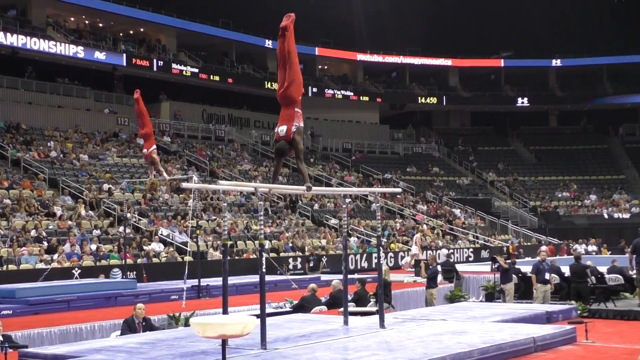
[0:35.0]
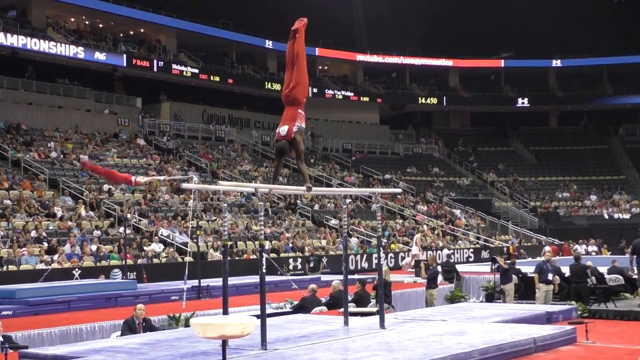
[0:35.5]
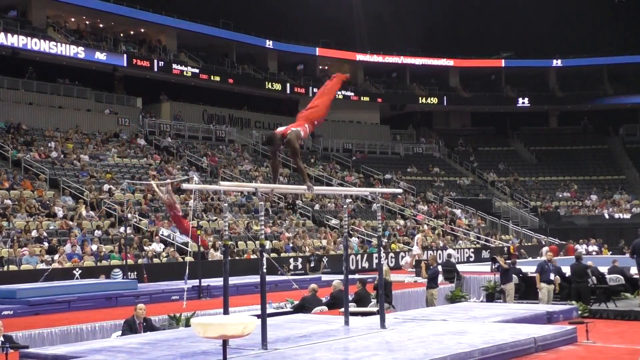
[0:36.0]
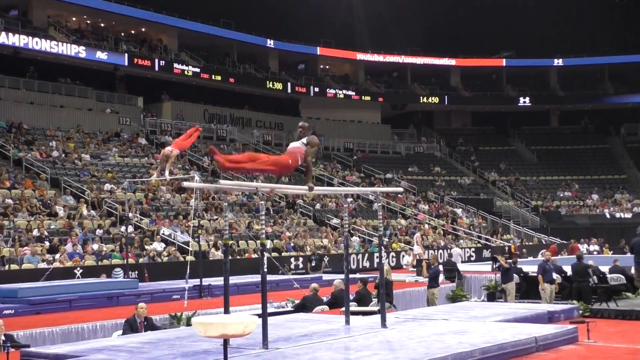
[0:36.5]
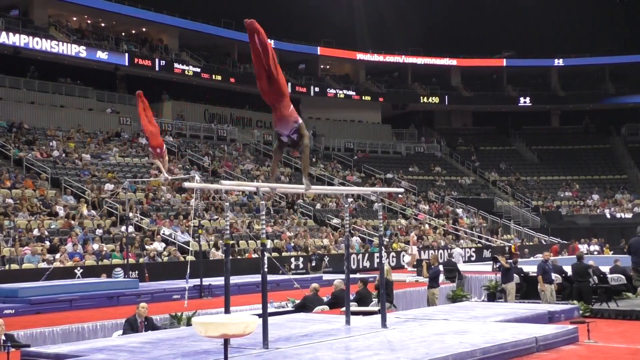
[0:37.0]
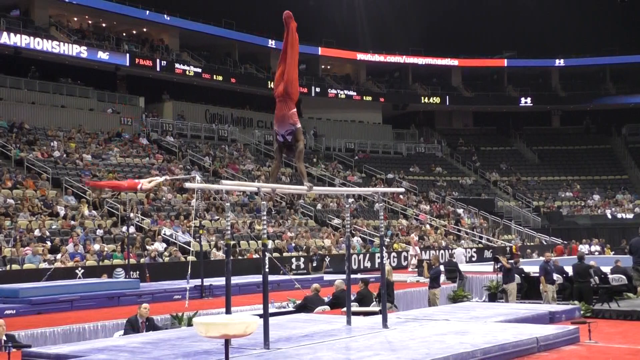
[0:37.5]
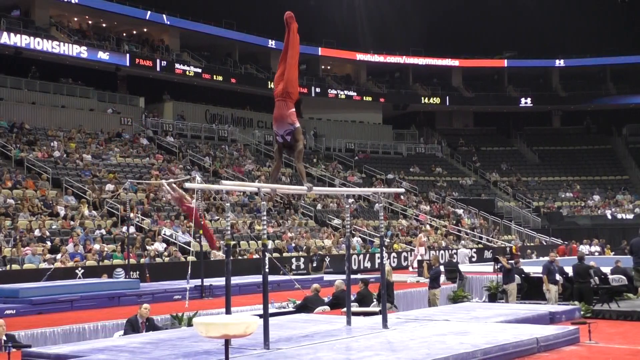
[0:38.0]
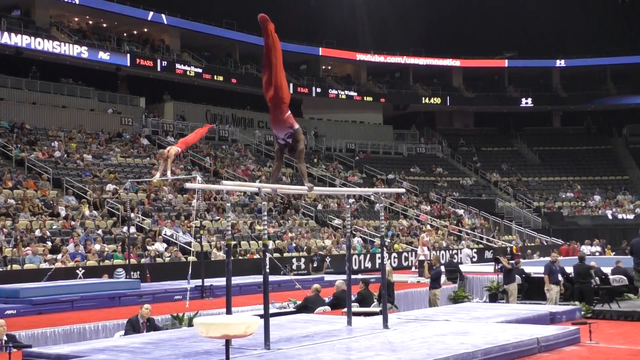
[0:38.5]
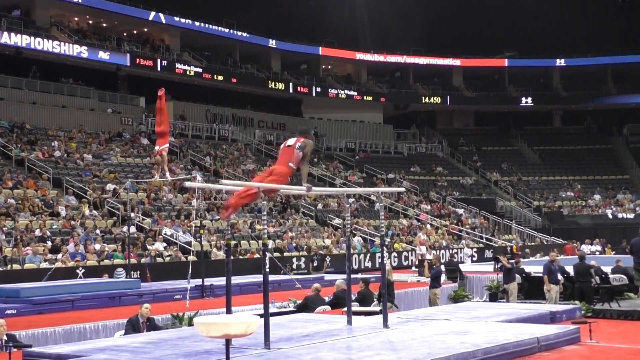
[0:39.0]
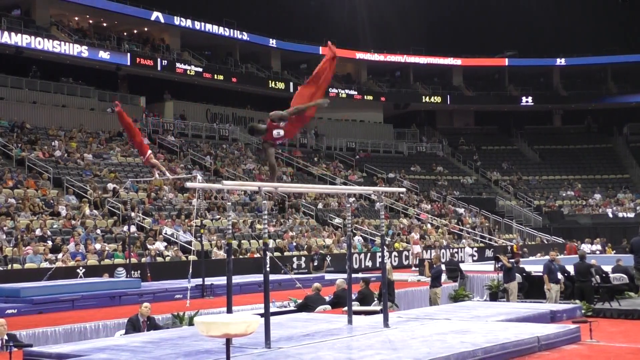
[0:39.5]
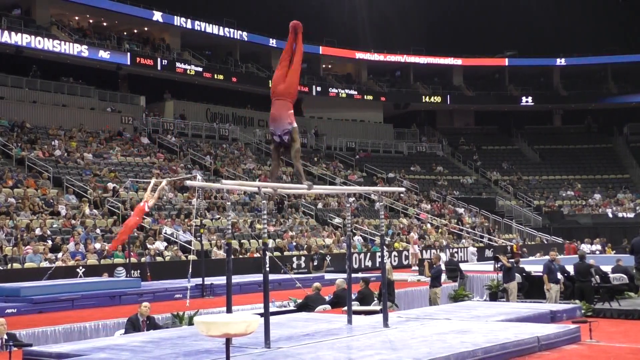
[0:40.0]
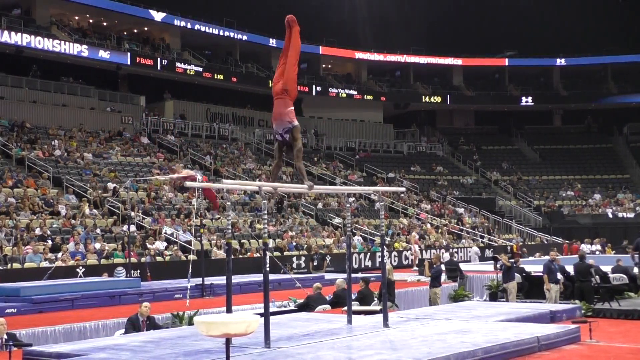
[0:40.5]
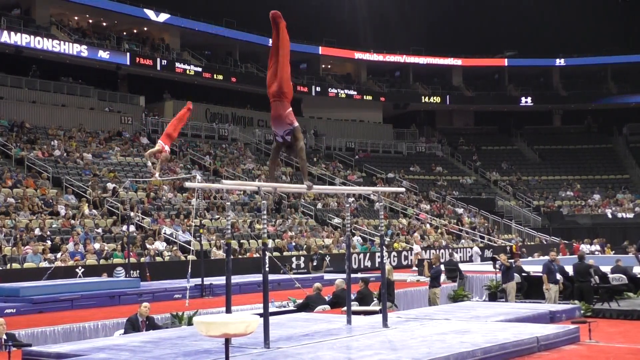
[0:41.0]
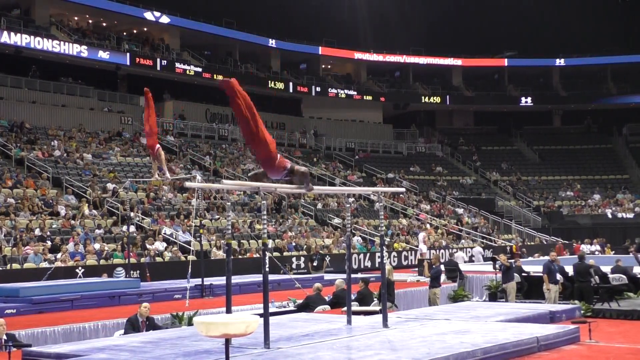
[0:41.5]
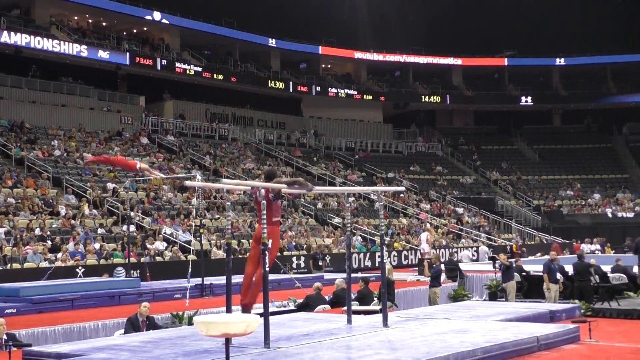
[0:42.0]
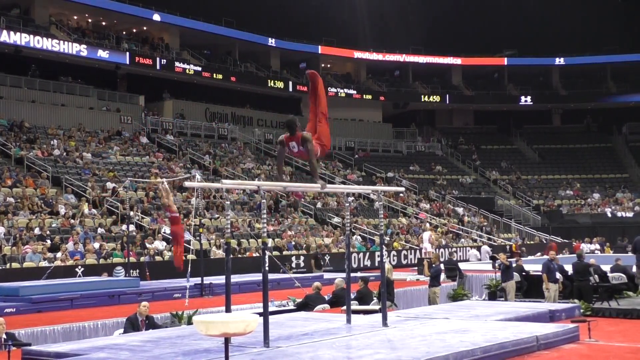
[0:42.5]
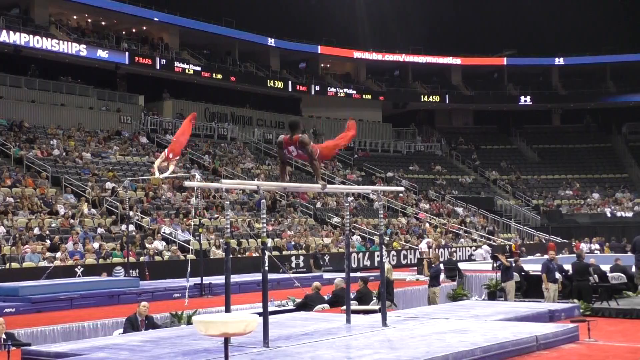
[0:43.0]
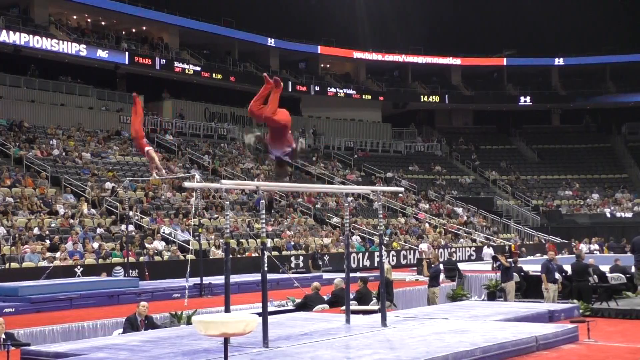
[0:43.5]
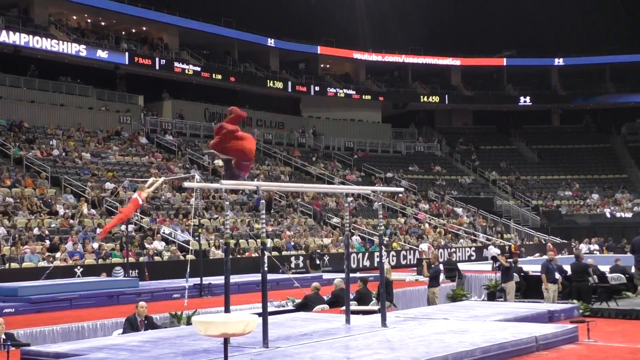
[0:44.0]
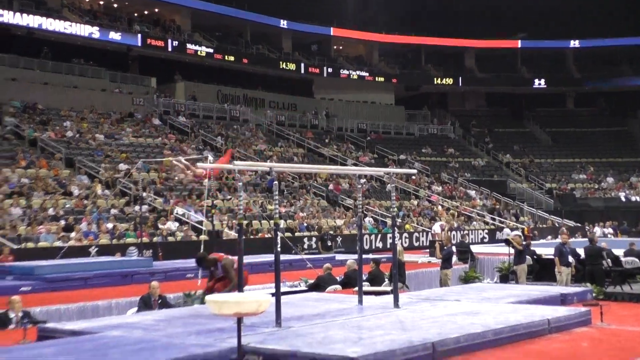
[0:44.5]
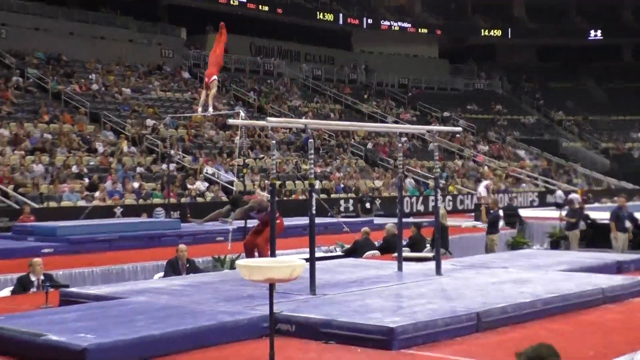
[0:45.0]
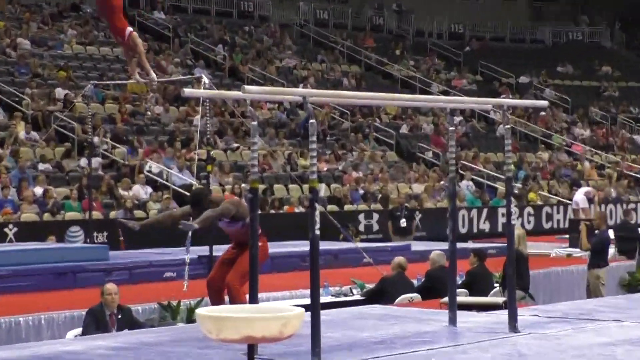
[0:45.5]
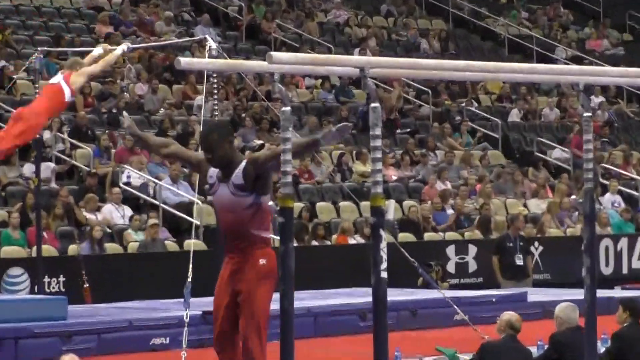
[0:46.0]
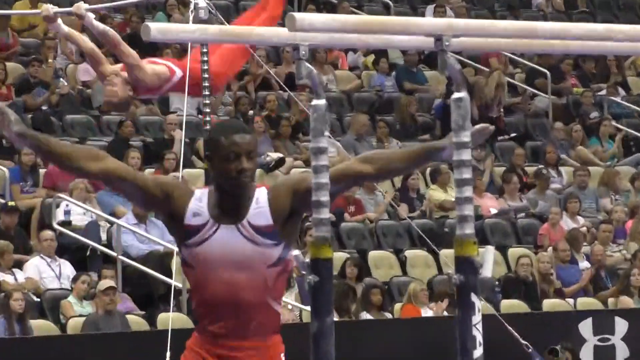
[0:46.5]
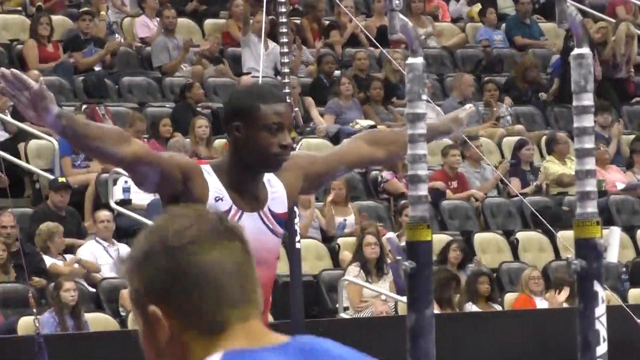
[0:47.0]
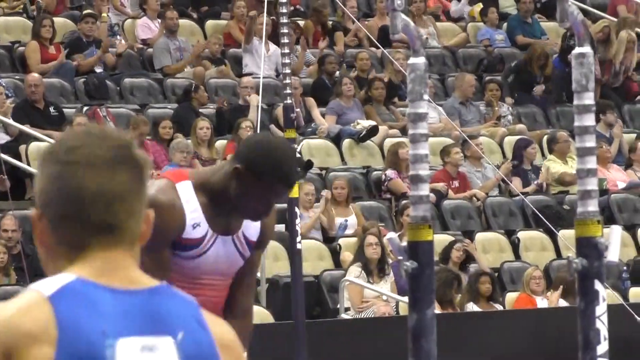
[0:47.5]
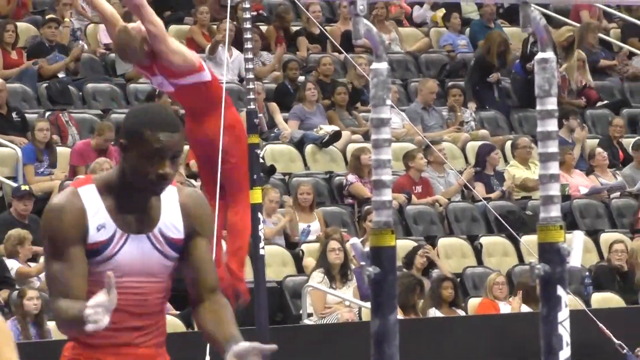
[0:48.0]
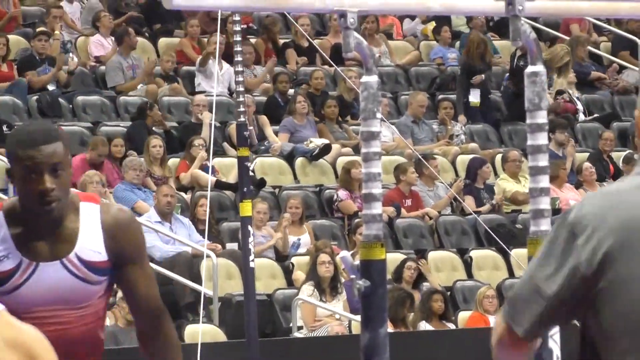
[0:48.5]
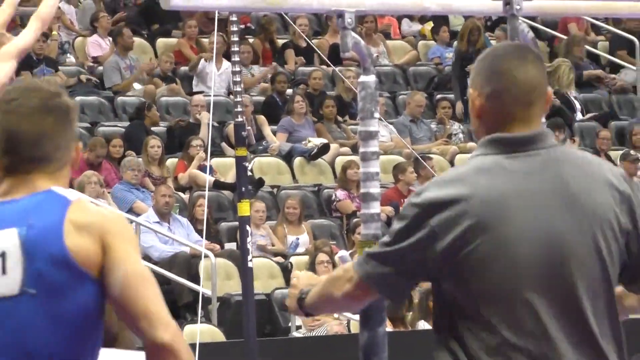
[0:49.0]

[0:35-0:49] At the U.S. National Gymnastics Championships, Marvin Kimble reaches the end of his parallel bars routine and finishes with a successful dismount from the bars. In the dismount he does a backflip twist so that he ends up facing forward, and he sticks the landing with both feet on the mat. His team then rushes out to him, clapping, so it looks like his routine was executed well.